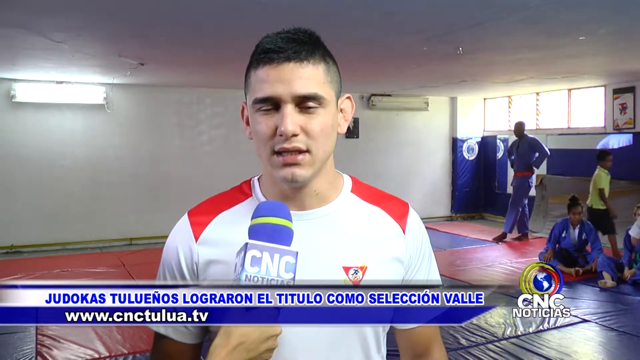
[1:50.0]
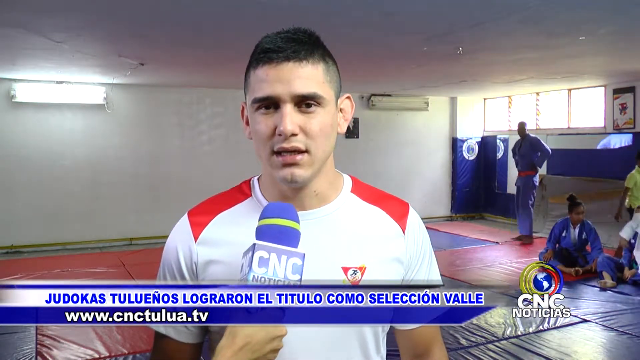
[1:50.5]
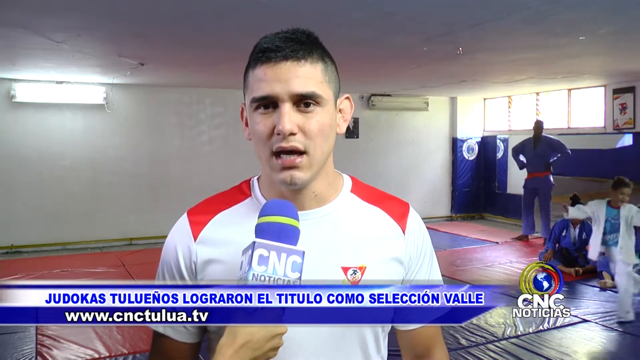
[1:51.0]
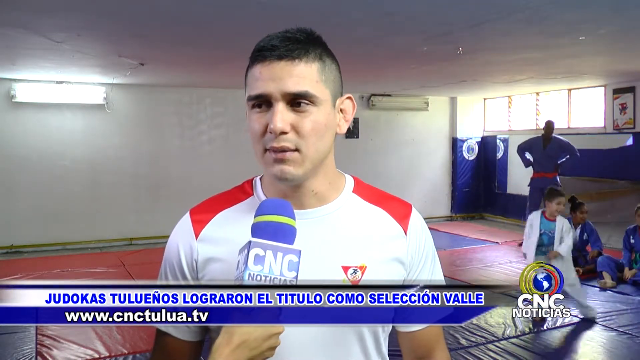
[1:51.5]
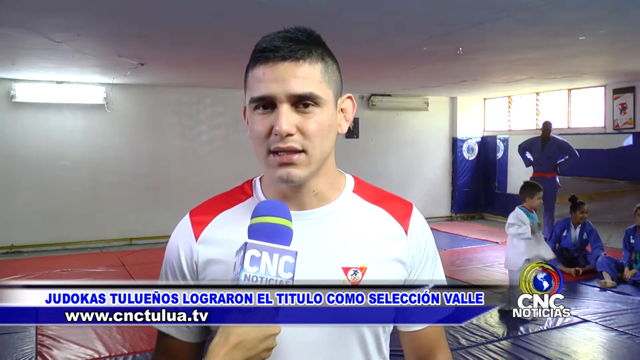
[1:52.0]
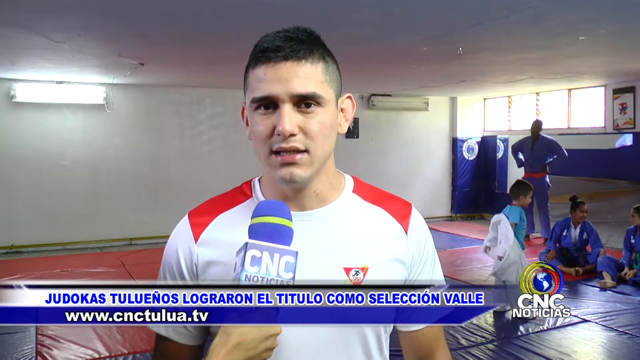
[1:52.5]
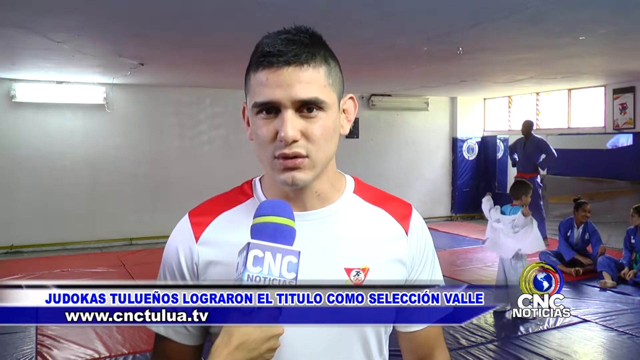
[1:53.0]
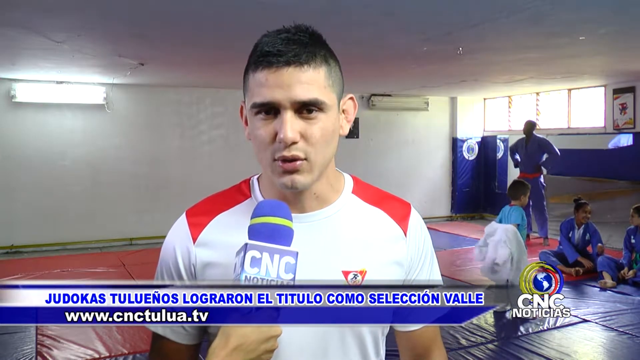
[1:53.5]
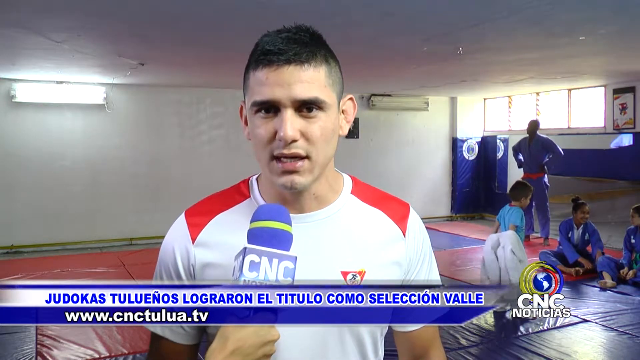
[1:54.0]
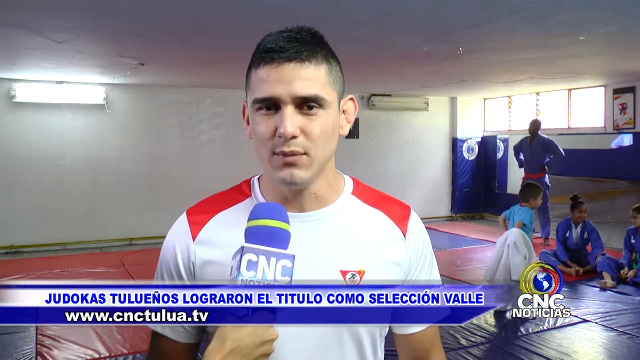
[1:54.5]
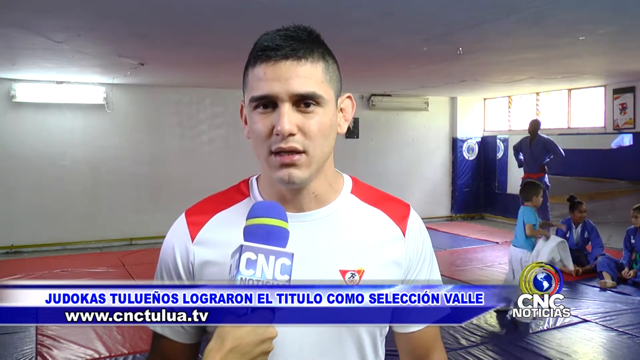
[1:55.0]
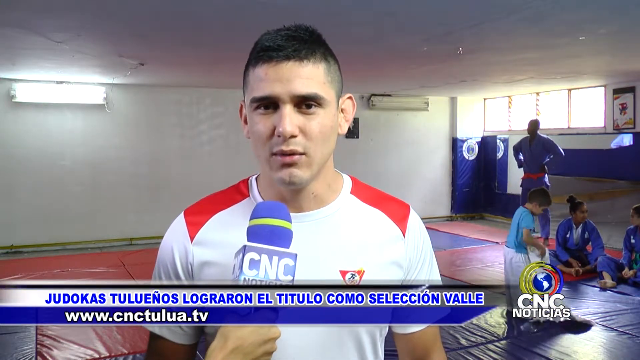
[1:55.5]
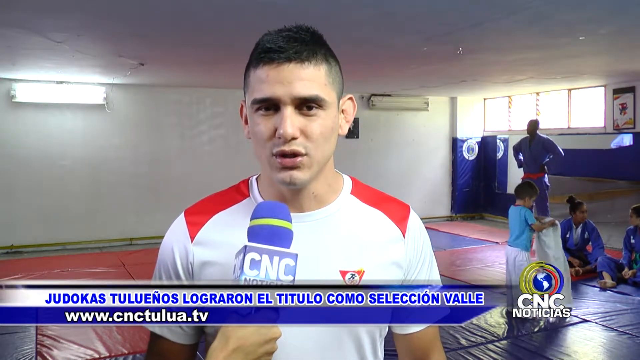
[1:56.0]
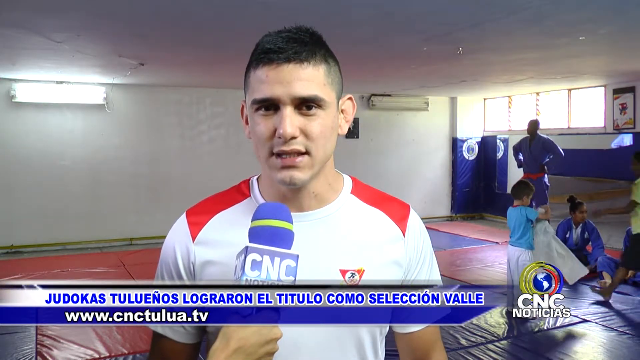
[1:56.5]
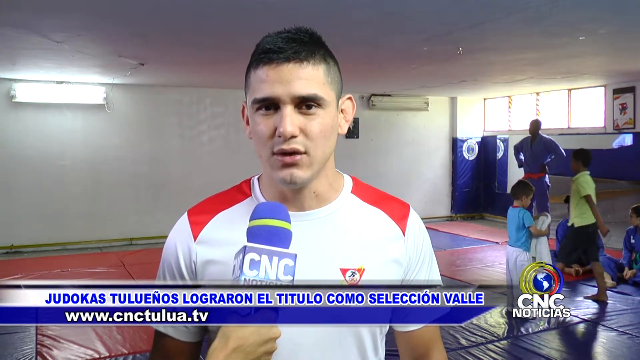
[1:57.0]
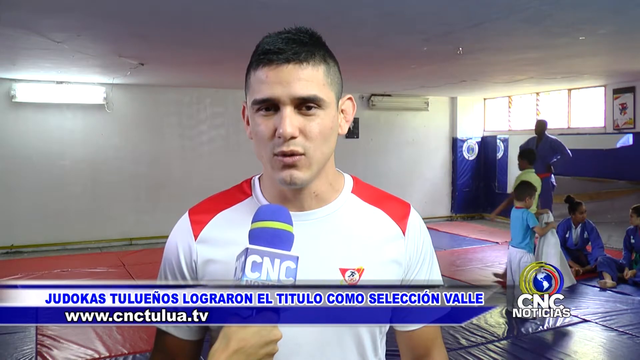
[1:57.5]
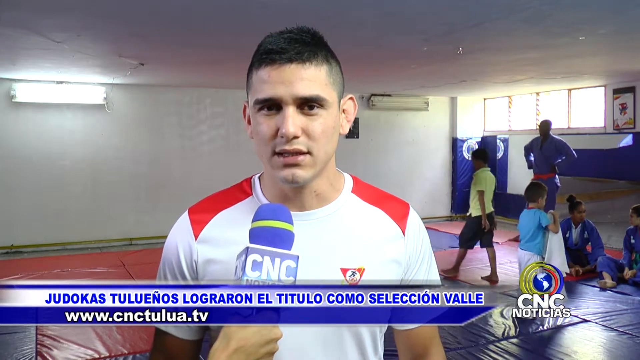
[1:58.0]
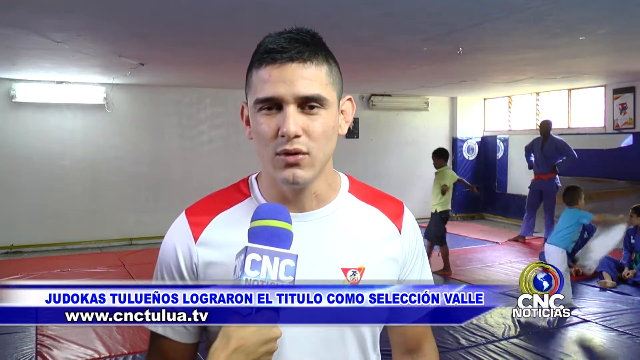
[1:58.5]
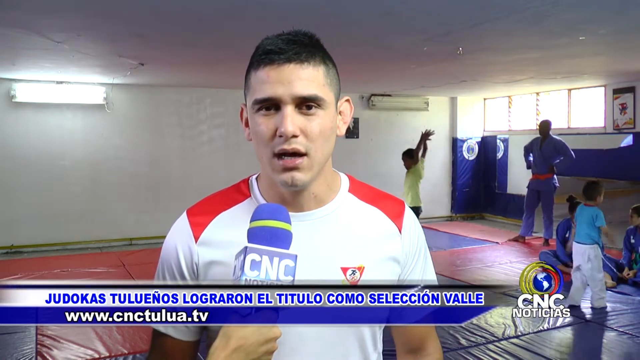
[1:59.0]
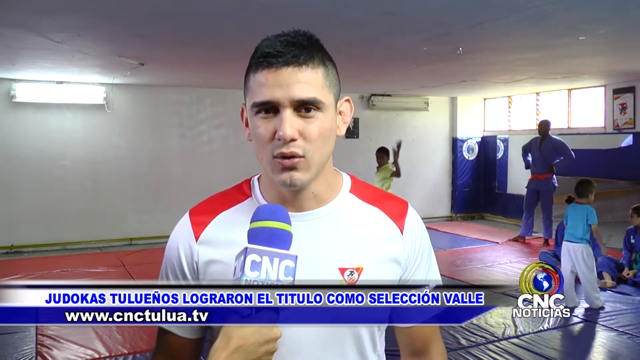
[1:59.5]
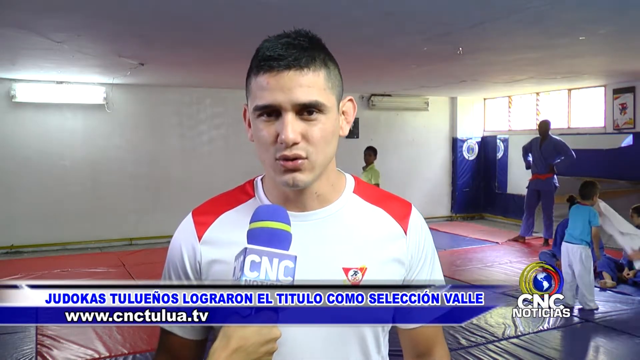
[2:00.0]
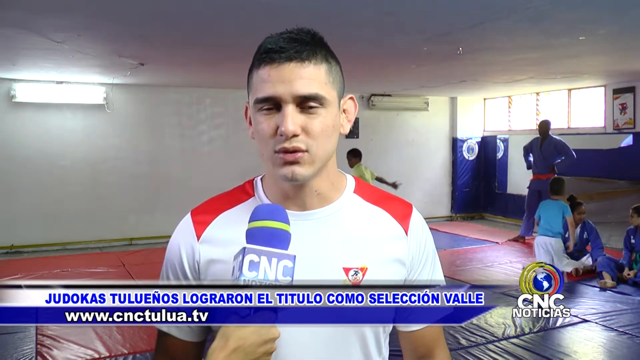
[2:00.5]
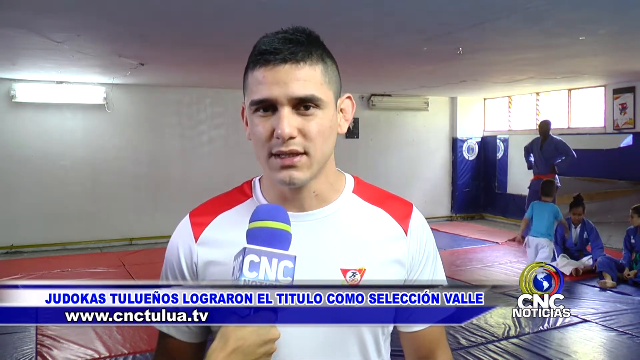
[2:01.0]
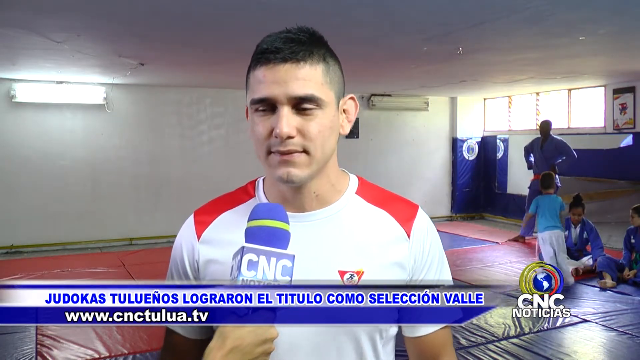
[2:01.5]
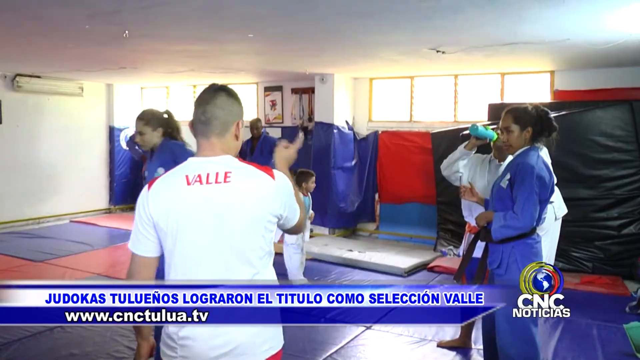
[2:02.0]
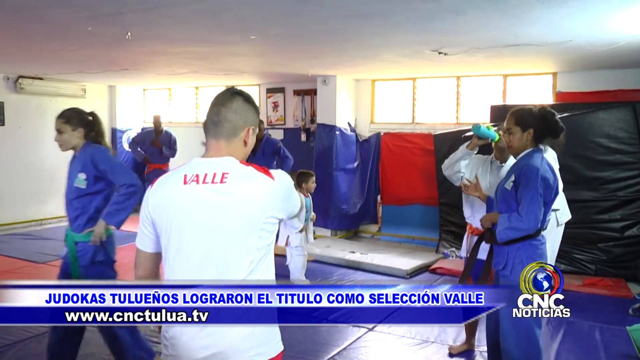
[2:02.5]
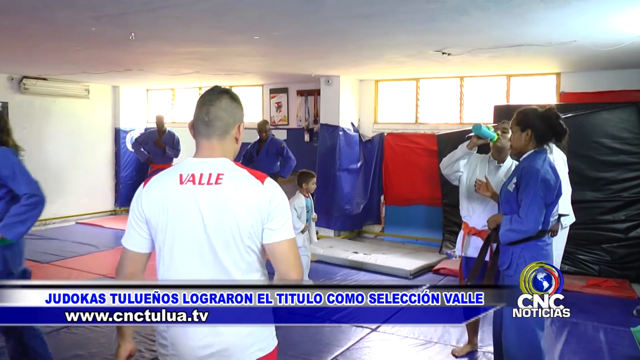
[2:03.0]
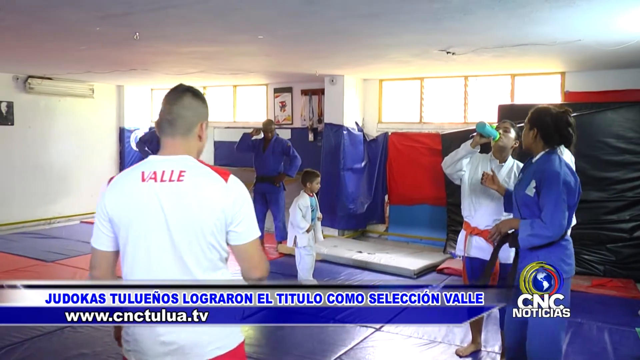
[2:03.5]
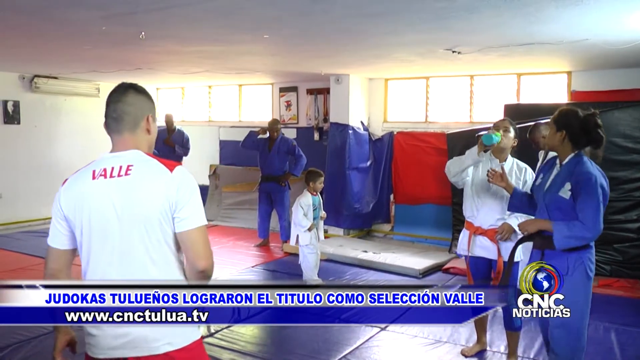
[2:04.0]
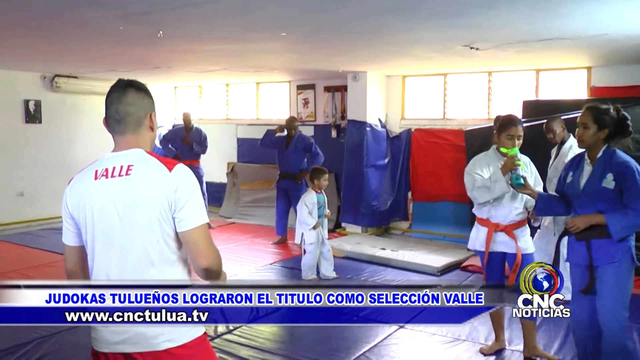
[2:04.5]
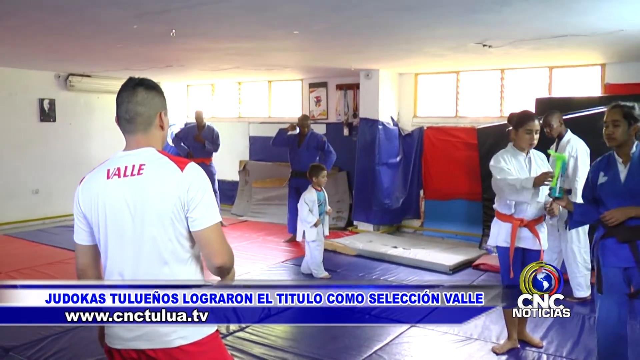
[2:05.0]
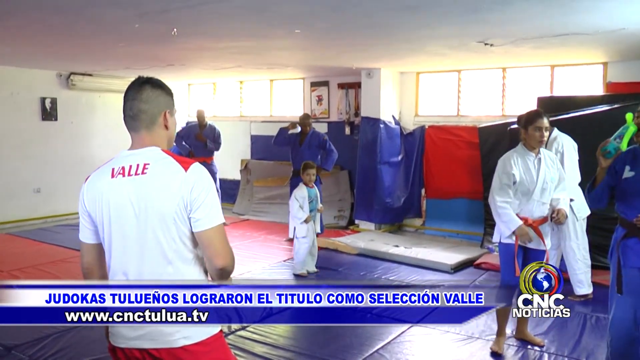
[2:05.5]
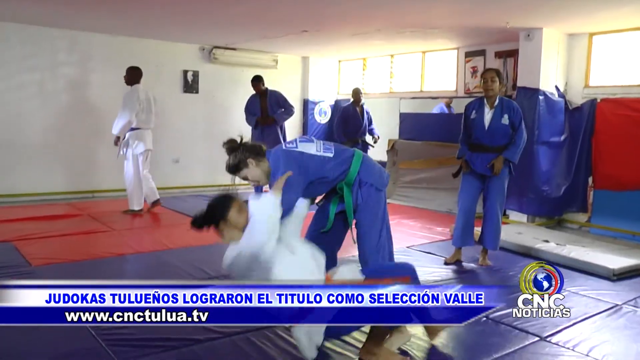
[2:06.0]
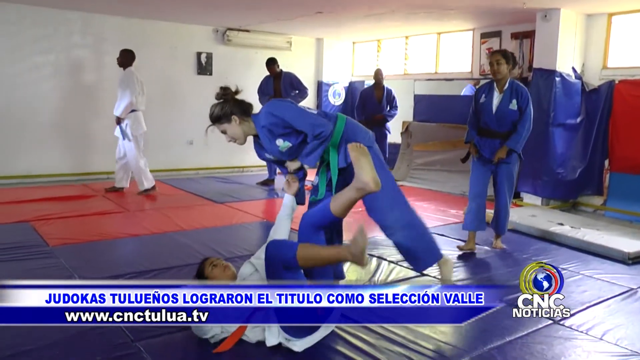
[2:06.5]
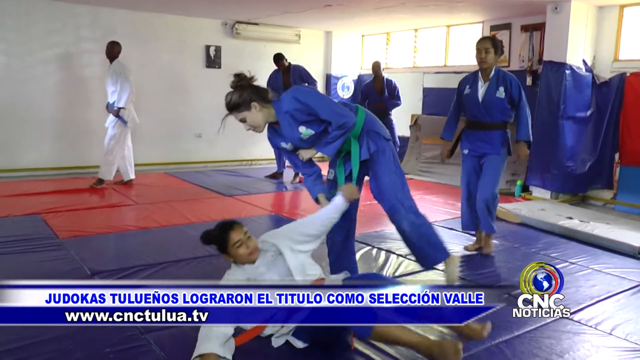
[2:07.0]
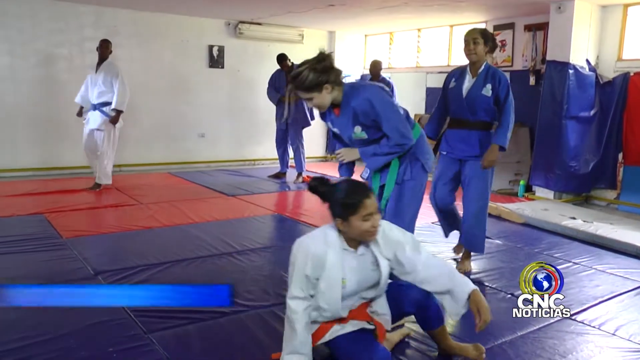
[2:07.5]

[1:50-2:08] The trainer is still speaking into the camera, looking straight at it, while someone holds the mic for him. In the background, two young women sit on the mat on the right of the screen, and a Black man who was tying his red belt now has it fully tied and stands with his arms above his waist. A child in a white outfit comes into the frame and takes off the jacket of the outfit, revealing a blue shirt underneath, while a Black child in a light green shirt walks in. The child throws the white jacket on the floor; it is then thrown to another person, who grabs it. In a new scene, the trainer has his back to the camera and is teaching and guiding the students, speaking to them. A Black woman in a white jacket with a red belt sips from a green water bottle and hands it over, and another Black woman picks it up with her right hand and goes to sip from it. Then there is more footage of the same young women sparring.